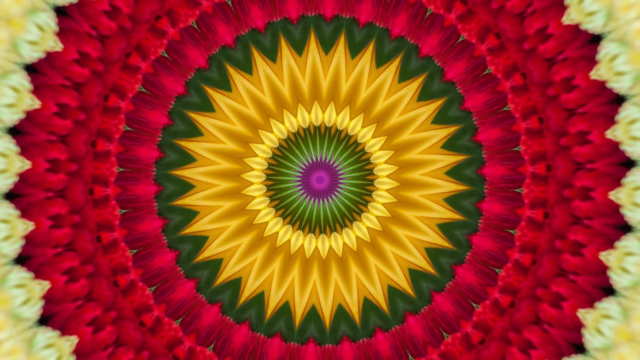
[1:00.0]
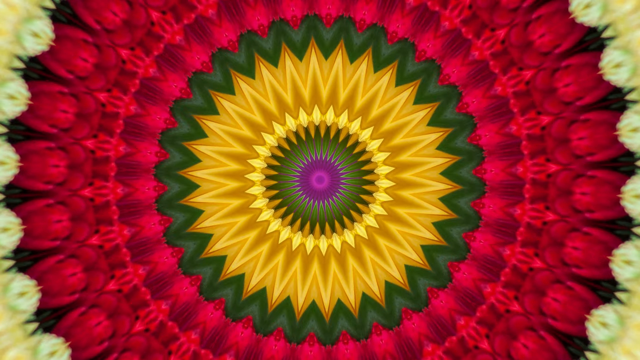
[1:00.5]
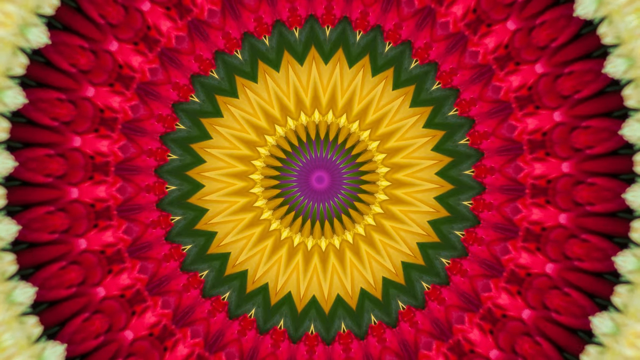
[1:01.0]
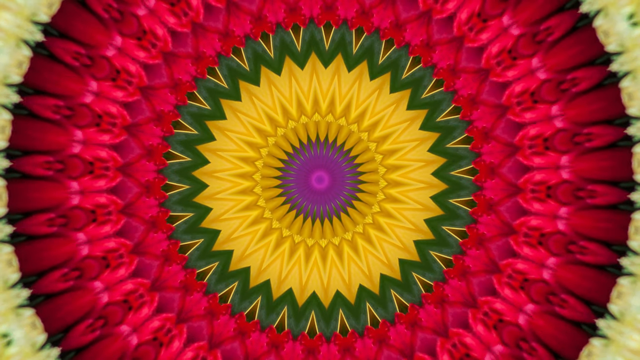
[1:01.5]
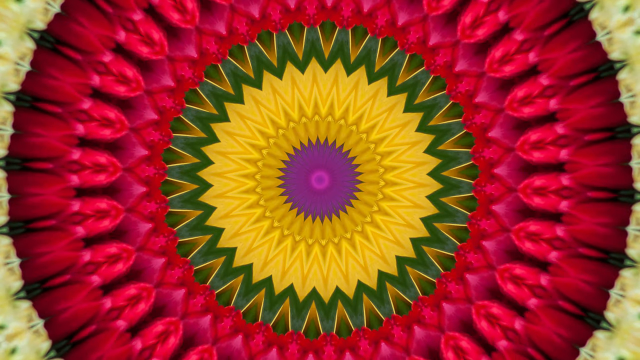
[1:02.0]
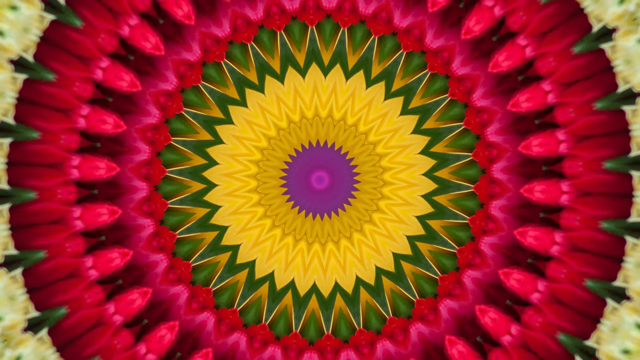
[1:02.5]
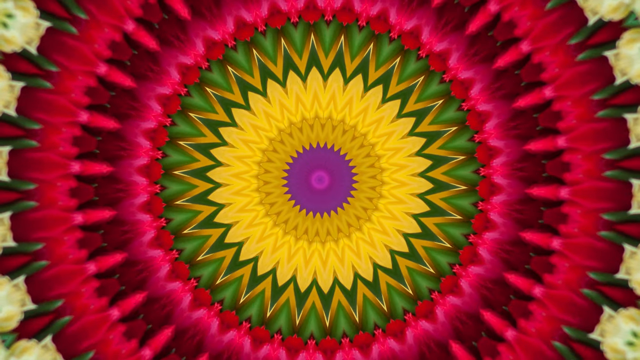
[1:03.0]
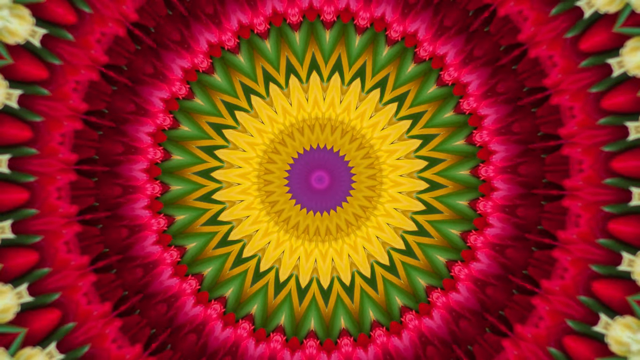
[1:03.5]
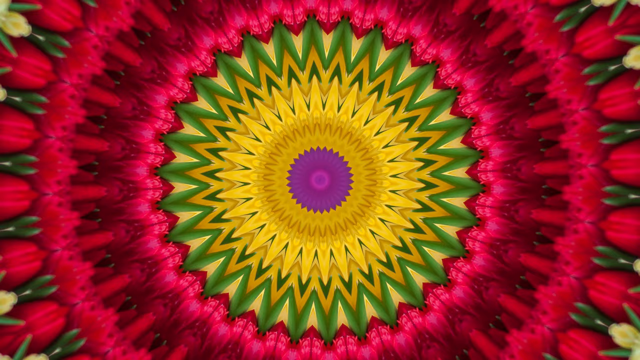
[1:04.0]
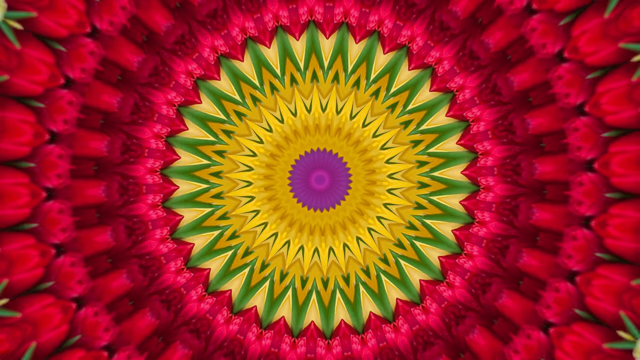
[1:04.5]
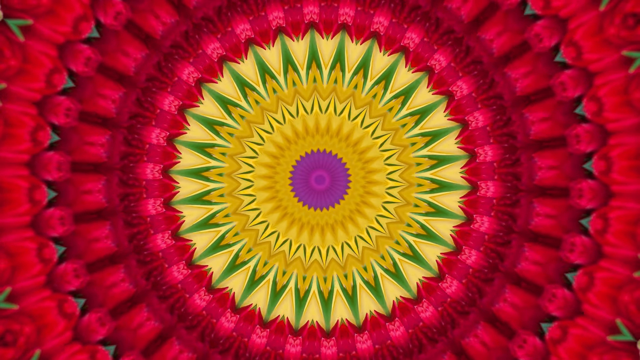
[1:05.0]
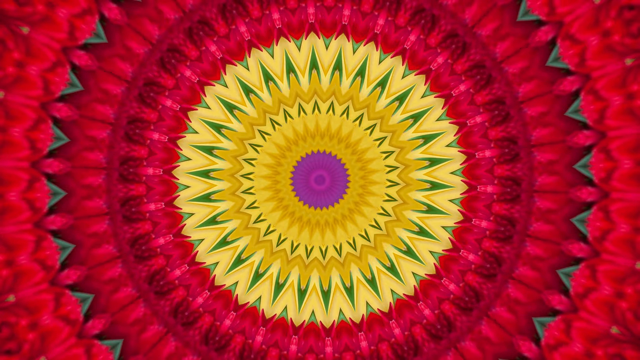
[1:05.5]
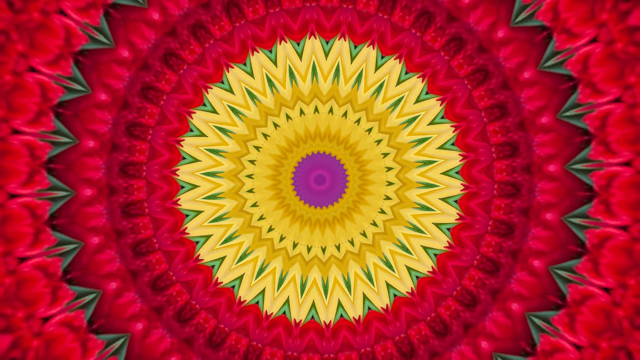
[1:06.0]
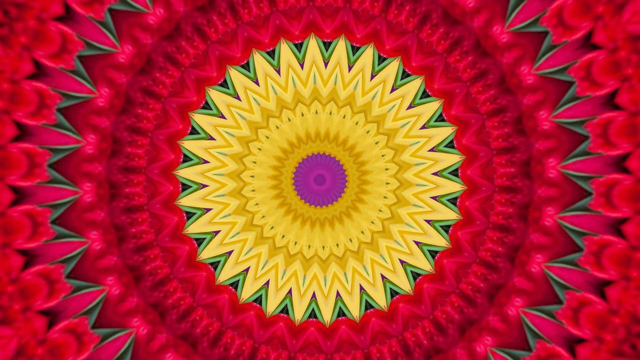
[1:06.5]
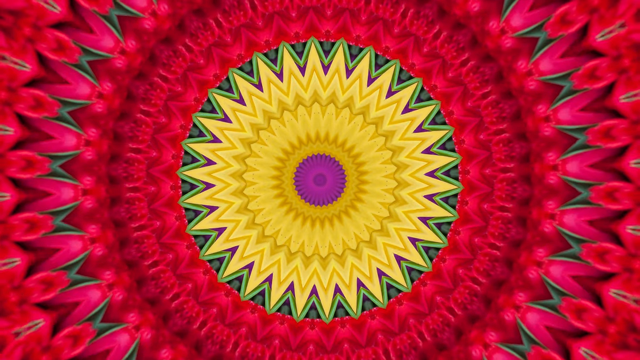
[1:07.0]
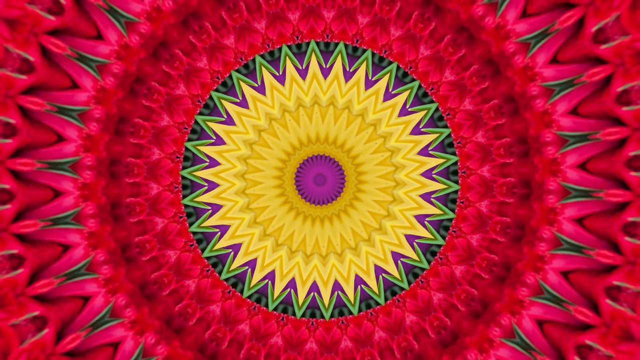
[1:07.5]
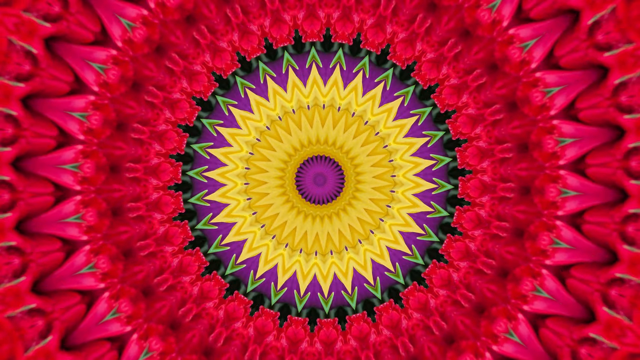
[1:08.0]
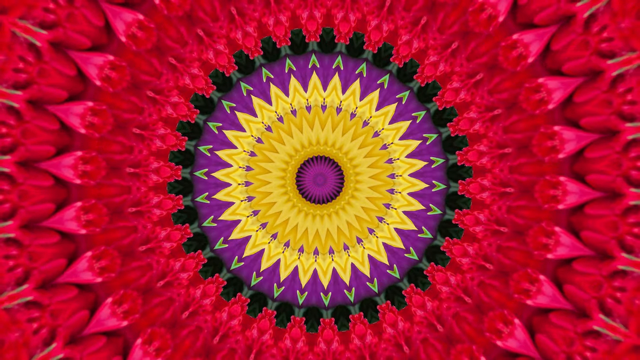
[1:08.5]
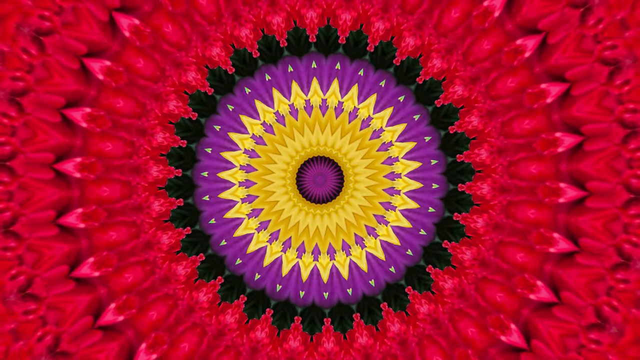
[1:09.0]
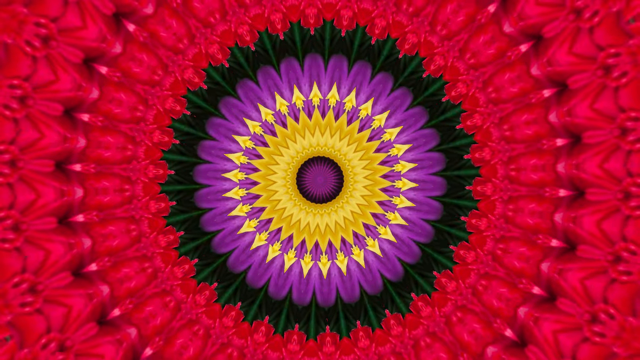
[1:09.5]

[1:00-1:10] The red part of the image seems to have some black in it separating the different designs in that part of the circle. The sunflower-like center is still visible, now smaller, and looks to be bordered in green, while mint green and tan border and contrast the red outsides. At one point it almost looks like roses or flowers are portrayed on the sides between the green and red arrow-like designs. Green arrow-type shapes form near the center.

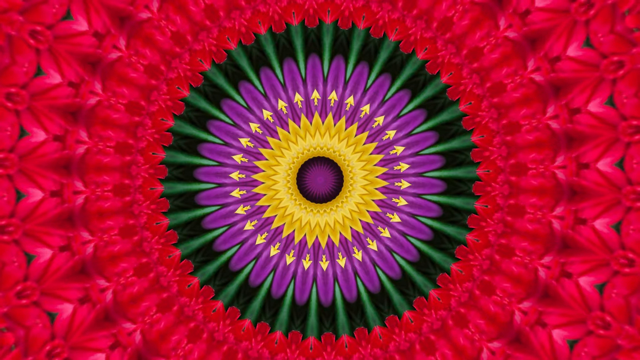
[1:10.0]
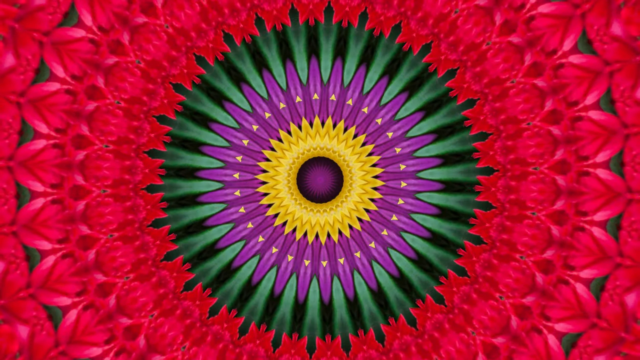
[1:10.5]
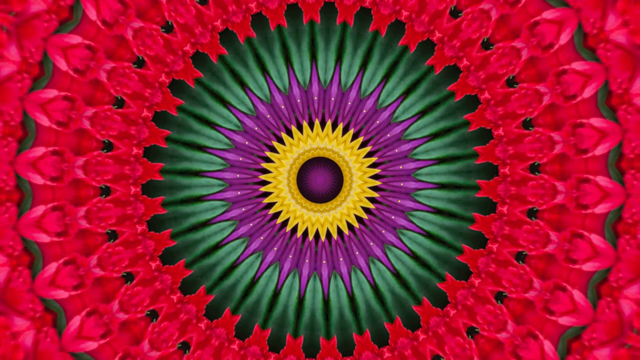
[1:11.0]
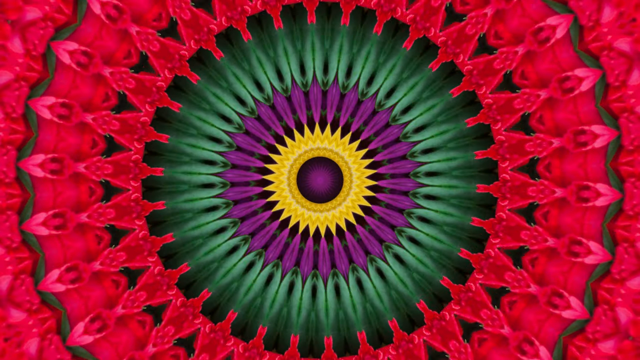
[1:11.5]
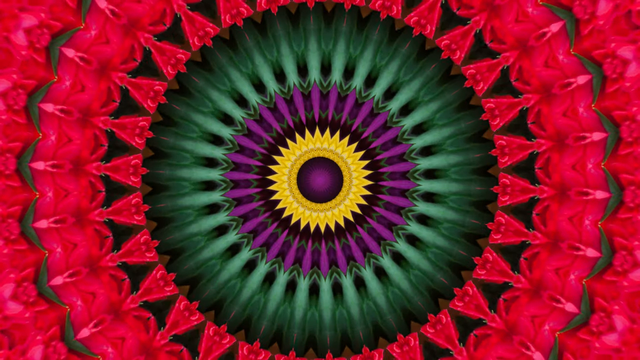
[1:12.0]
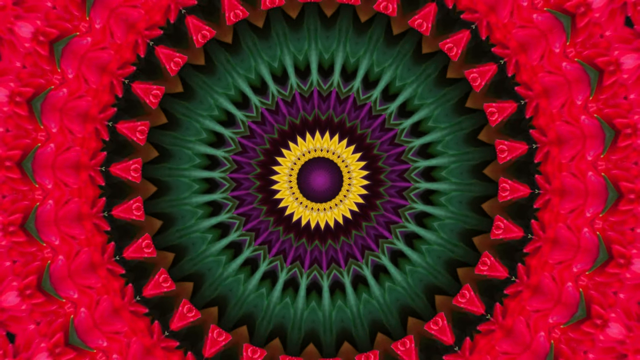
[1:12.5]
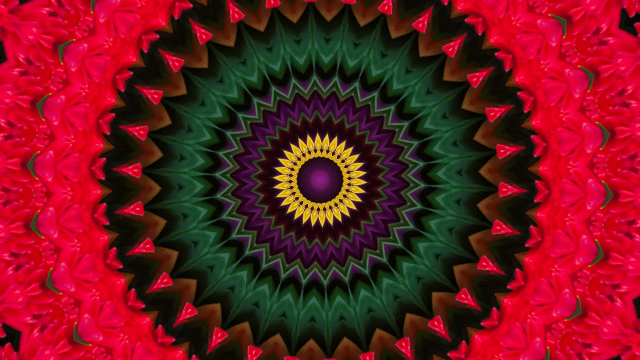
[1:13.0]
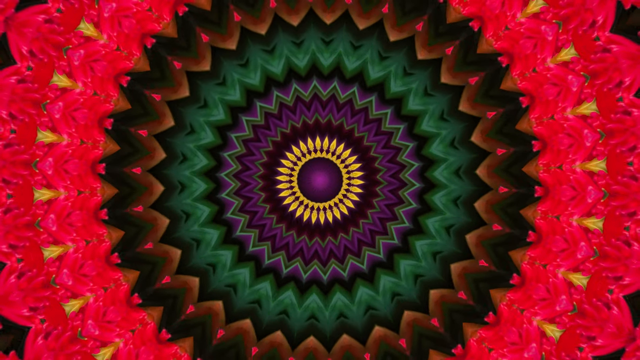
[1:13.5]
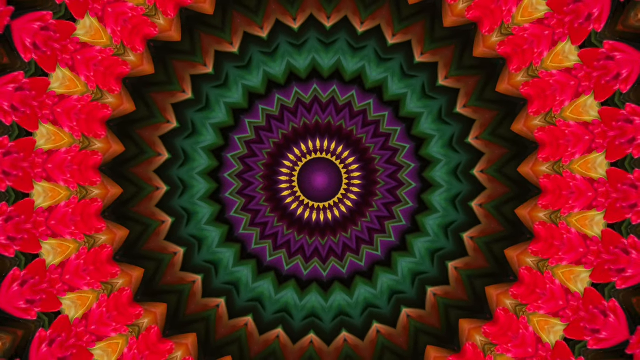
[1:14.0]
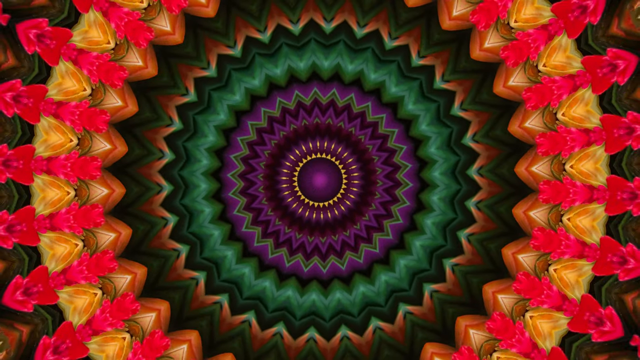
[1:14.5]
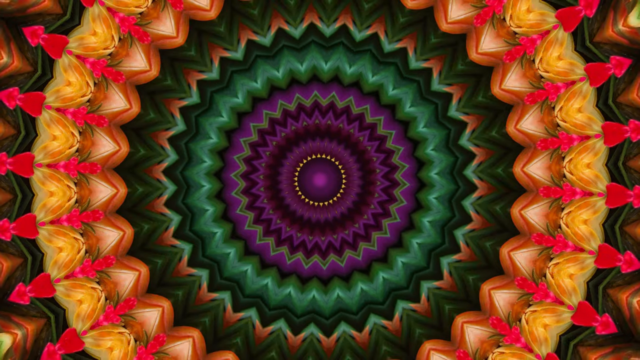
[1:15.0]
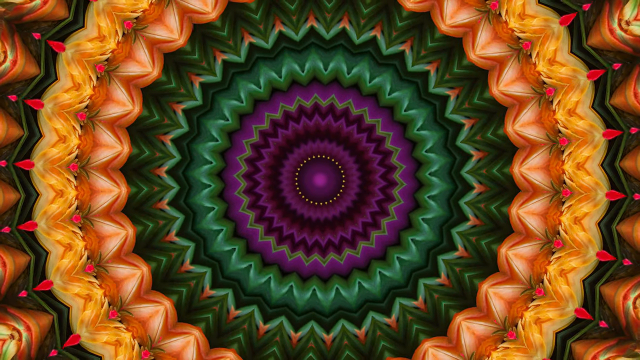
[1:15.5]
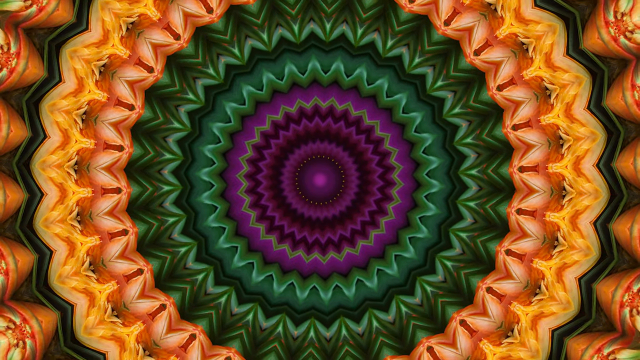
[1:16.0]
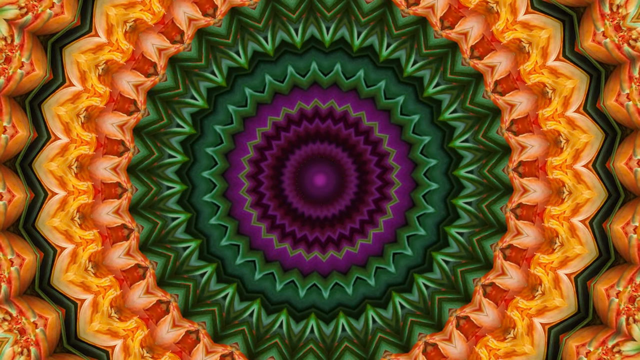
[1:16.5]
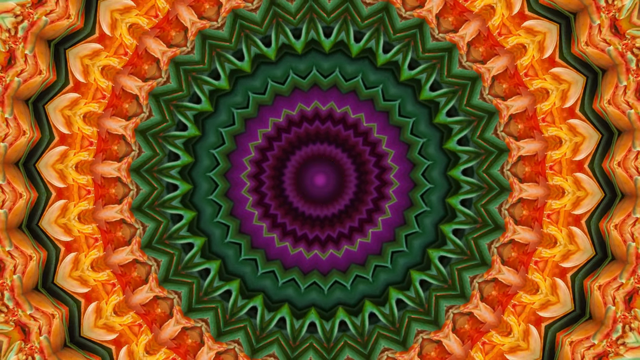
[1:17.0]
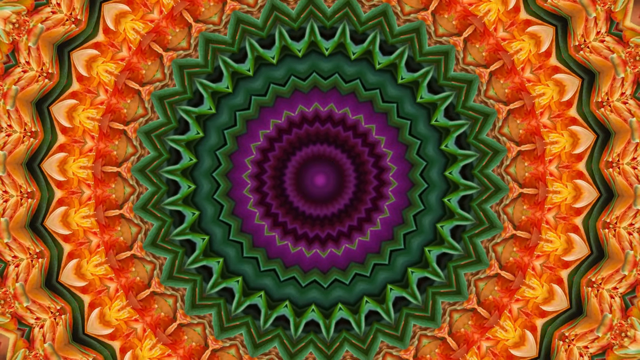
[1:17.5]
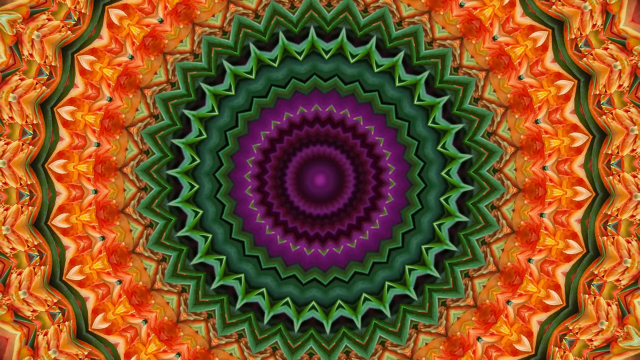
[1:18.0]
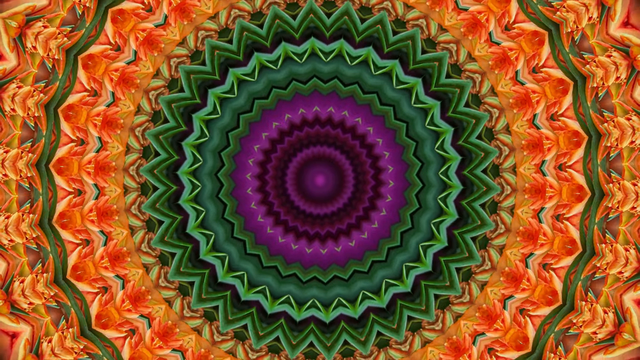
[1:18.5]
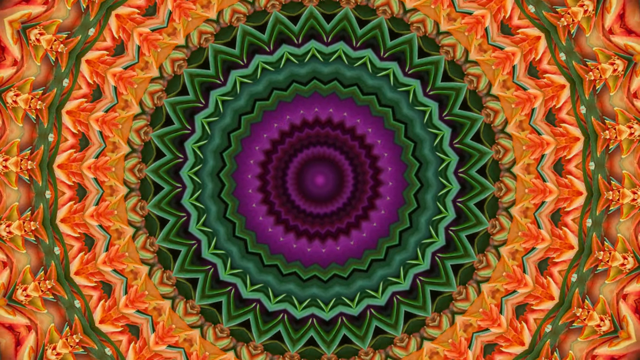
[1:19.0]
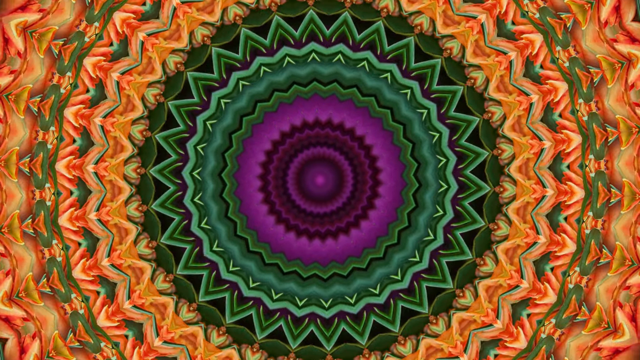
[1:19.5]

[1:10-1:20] The green spike-like parts of the flower-like part become larger and intertwine with the purple and yellow in the center. The inside sunflower-like part fades away, leaving a purple center surrounded by green. The green part is surrounded by a multitude of different colors in the most extensive design seen in the video. The lines seem to be getting smaller and more intricate, seem to be moving somewhat faster than at the beginning, and the colors seem to be getting a bit brighter.